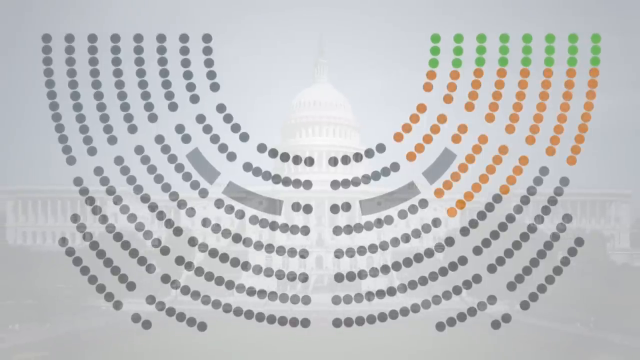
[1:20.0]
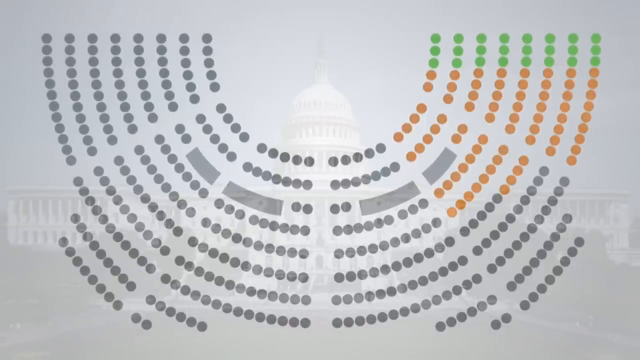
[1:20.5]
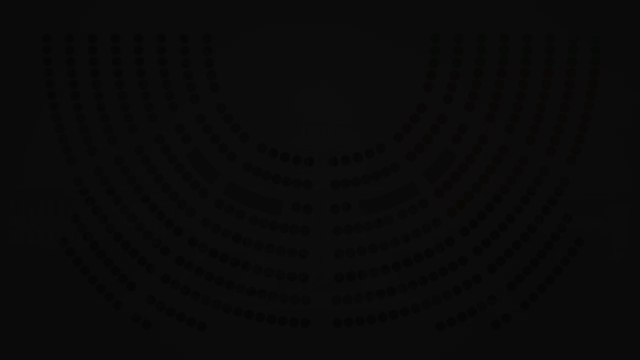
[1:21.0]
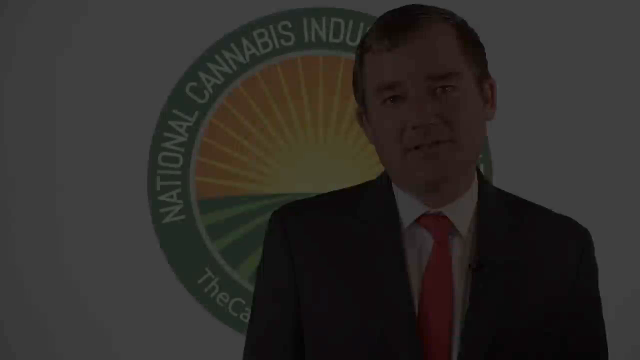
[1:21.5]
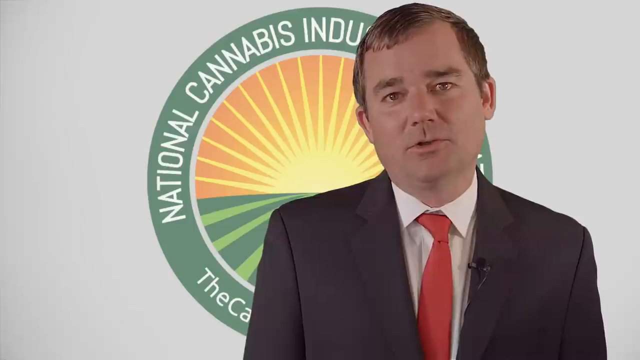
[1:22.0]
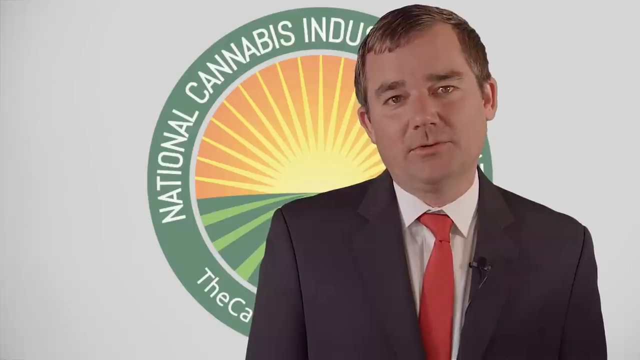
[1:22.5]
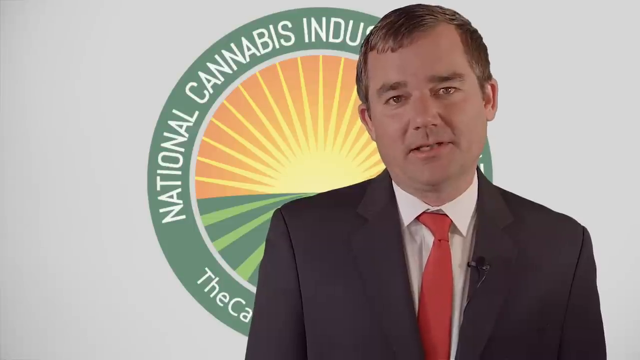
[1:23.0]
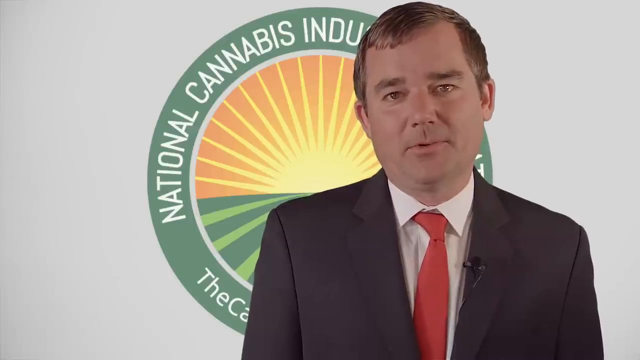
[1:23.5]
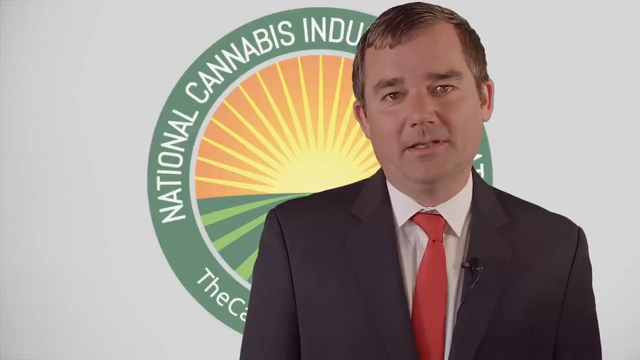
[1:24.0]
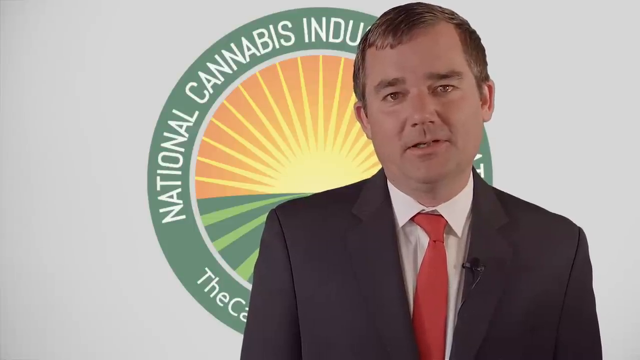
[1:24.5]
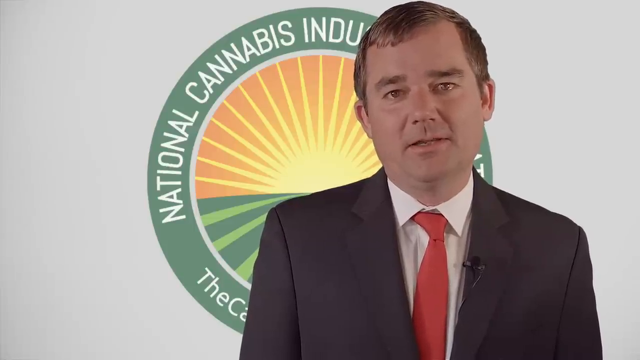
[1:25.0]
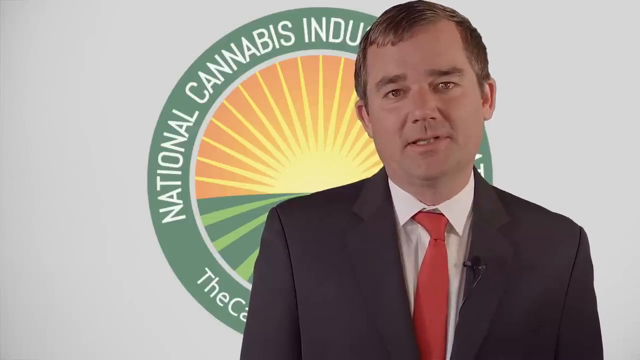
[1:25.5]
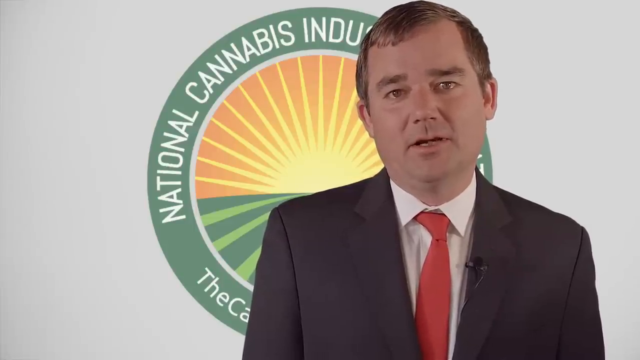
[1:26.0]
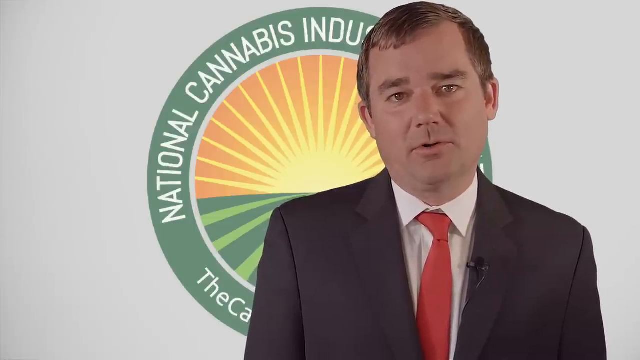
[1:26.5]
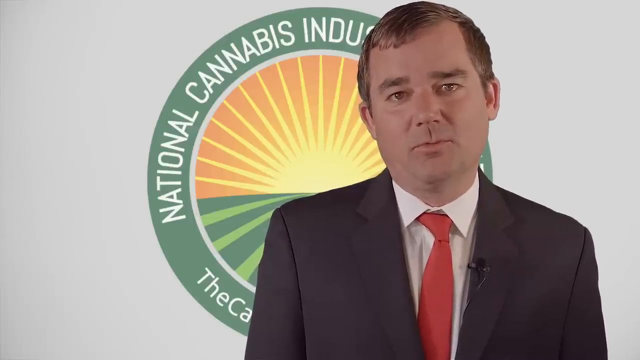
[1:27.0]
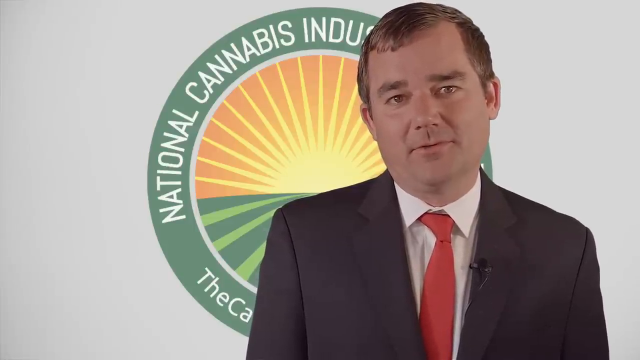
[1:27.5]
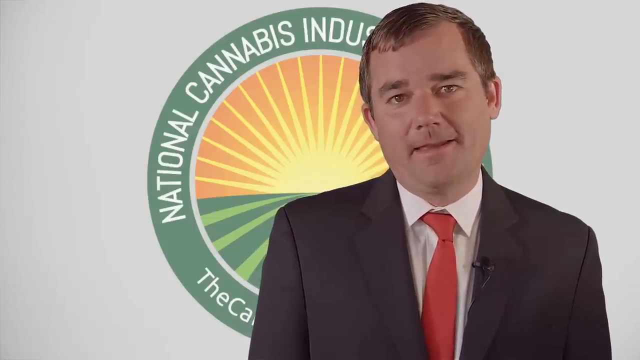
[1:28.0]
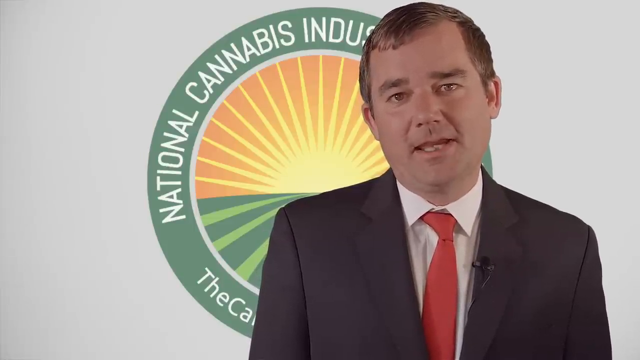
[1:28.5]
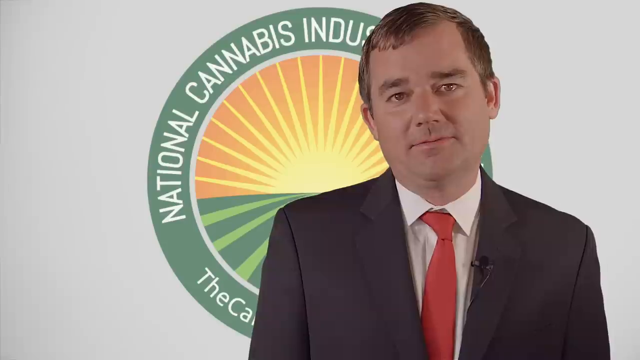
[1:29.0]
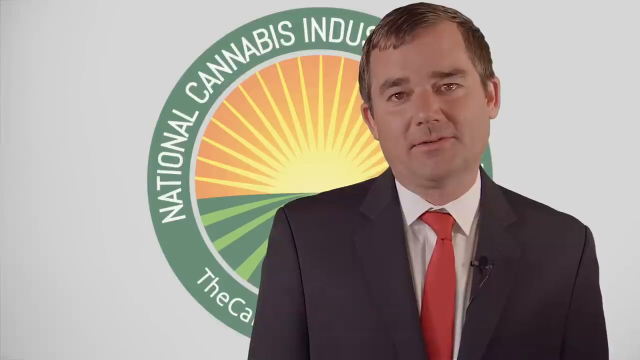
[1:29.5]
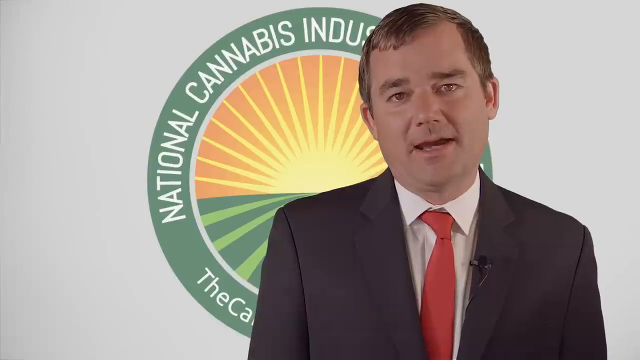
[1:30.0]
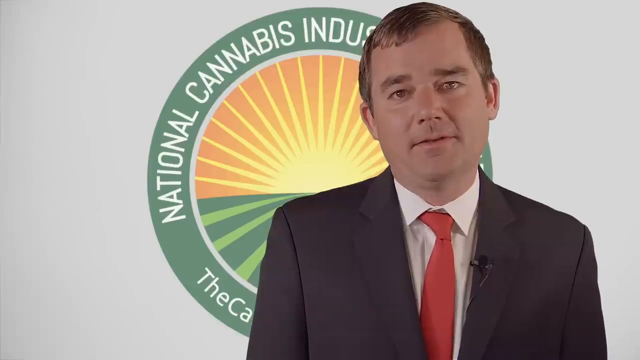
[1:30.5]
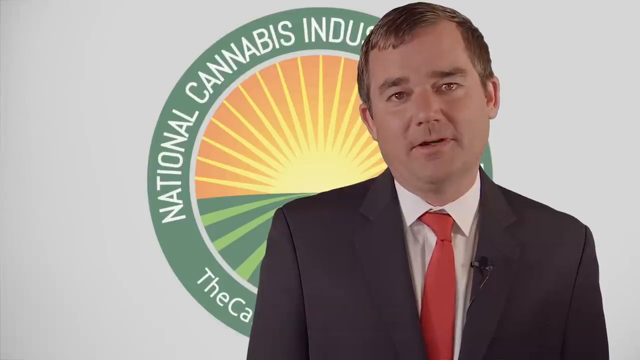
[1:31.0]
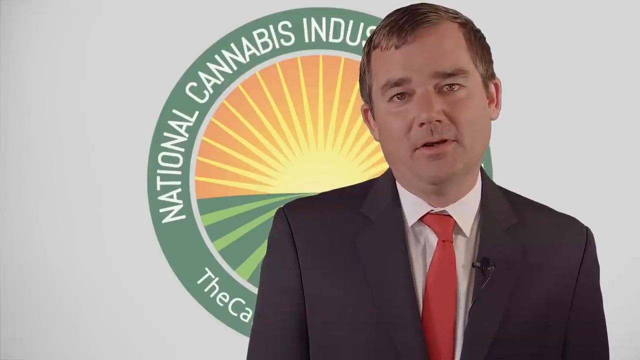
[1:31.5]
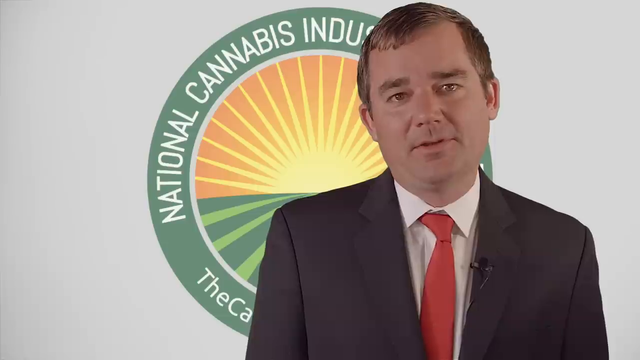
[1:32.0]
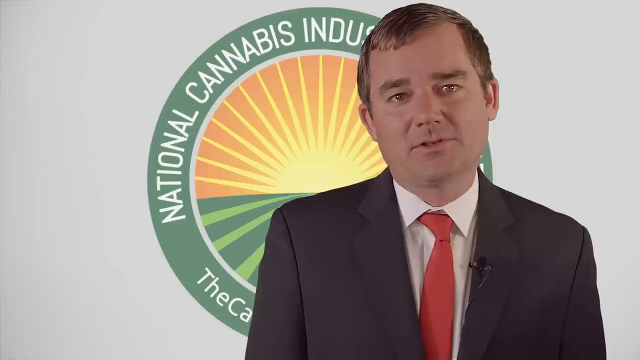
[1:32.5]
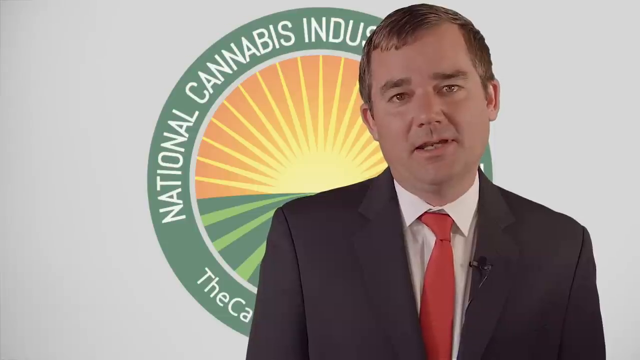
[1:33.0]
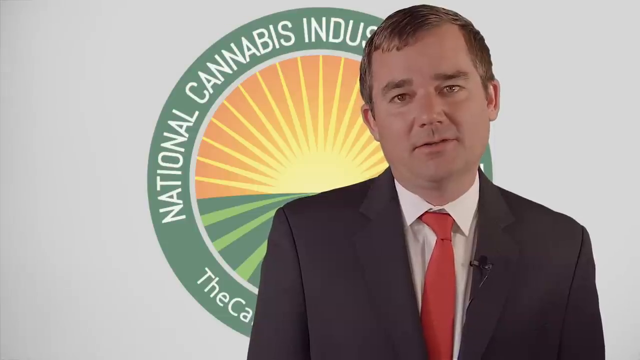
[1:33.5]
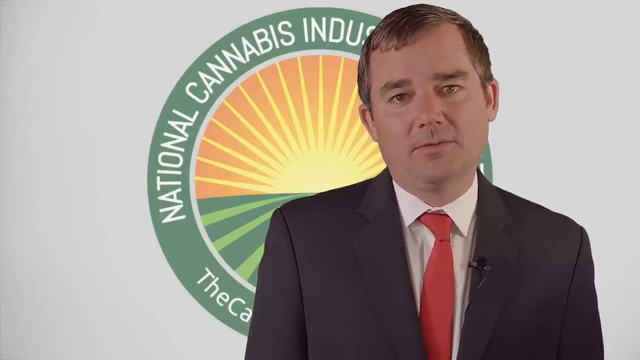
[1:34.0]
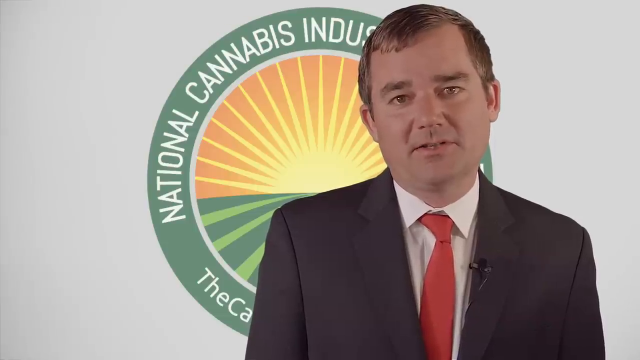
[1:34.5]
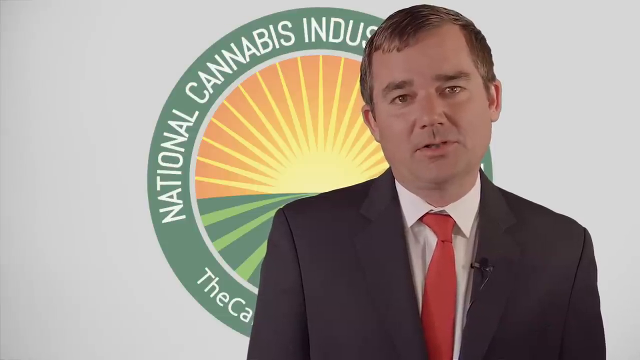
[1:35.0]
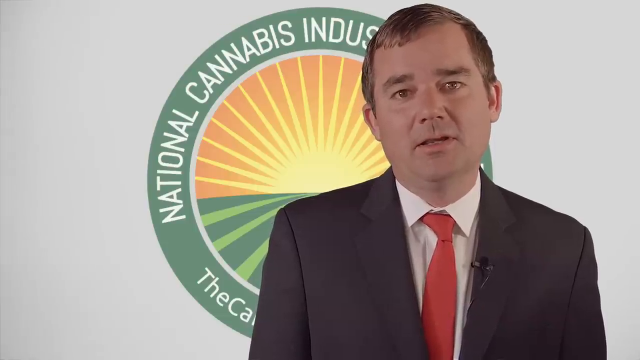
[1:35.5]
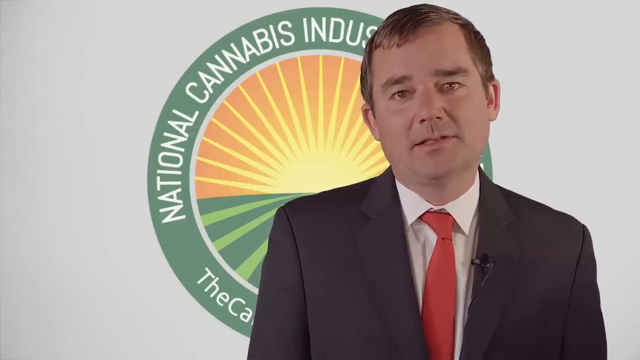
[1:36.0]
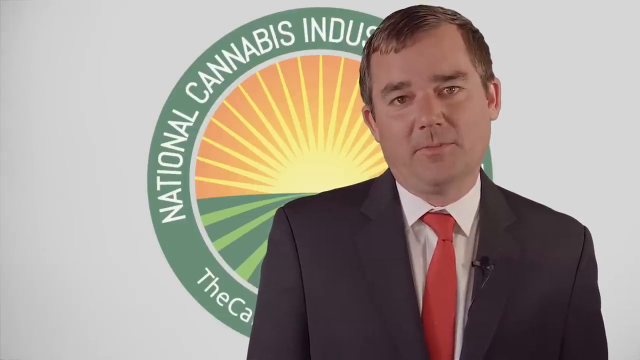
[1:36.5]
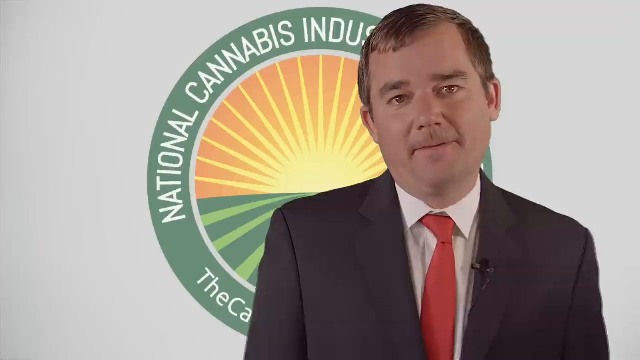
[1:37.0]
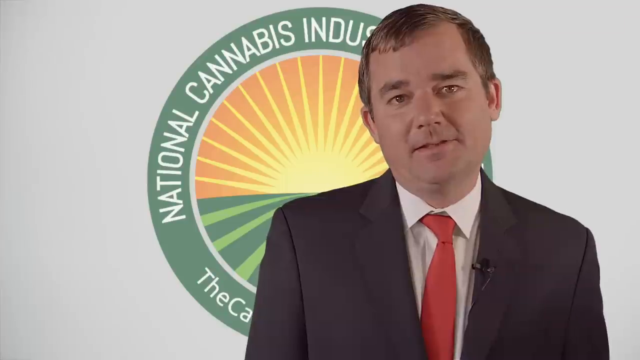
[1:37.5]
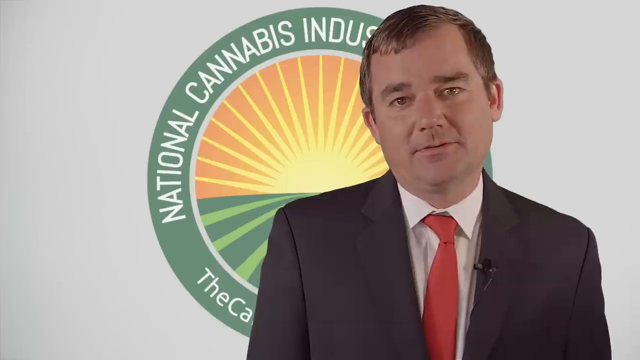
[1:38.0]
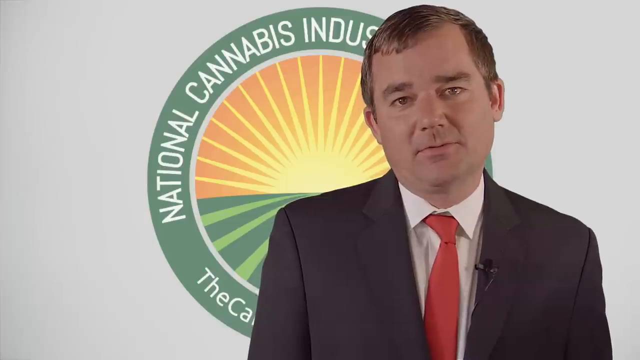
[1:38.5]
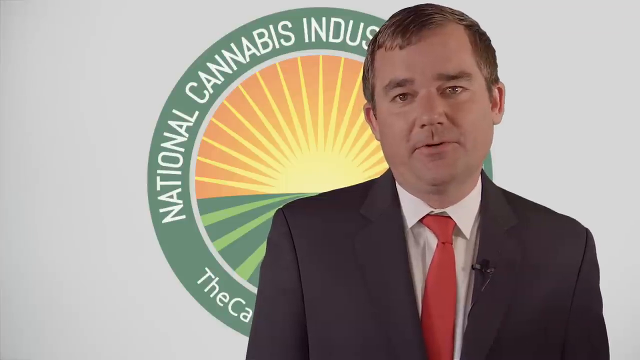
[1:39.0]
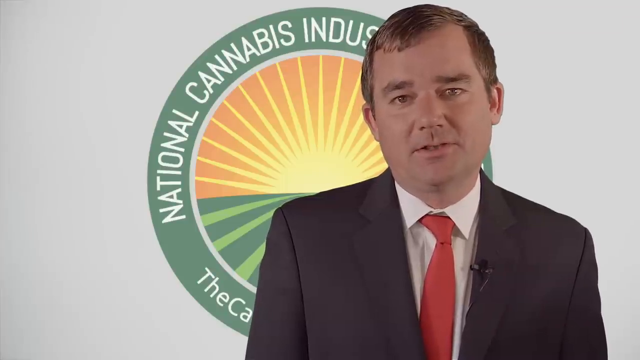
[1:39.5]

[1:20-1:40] The executive of the National Cannabis Industry Association continues talking toward the camera in a prolonged speech, with not much movement or anything else happening. His left shoulder is slightly lower than his right, and his face is slightly bent toward the left of the screen.